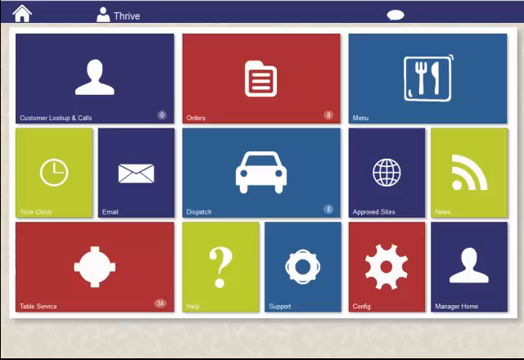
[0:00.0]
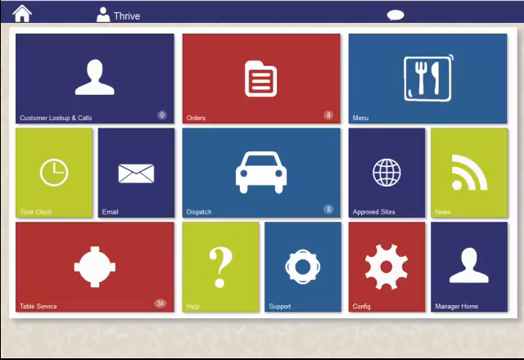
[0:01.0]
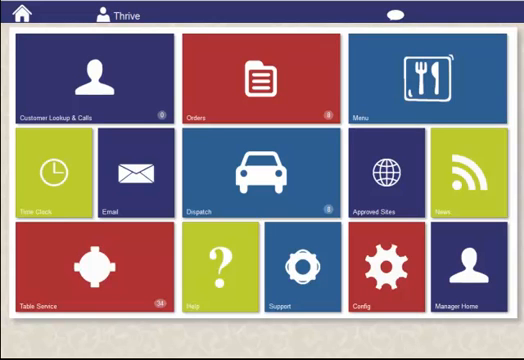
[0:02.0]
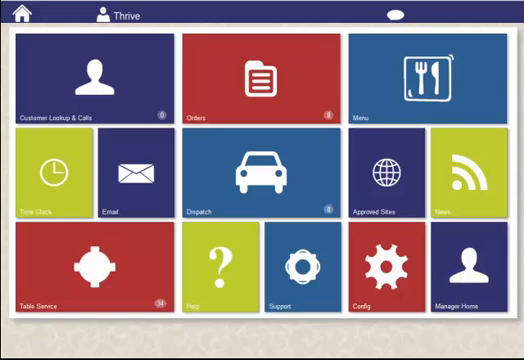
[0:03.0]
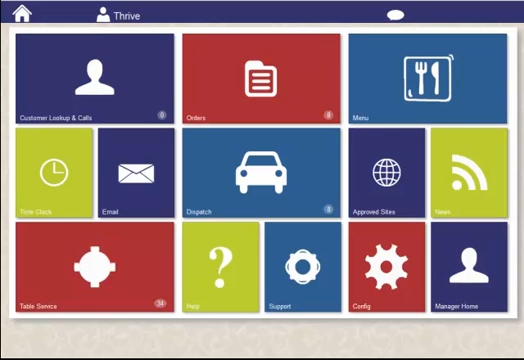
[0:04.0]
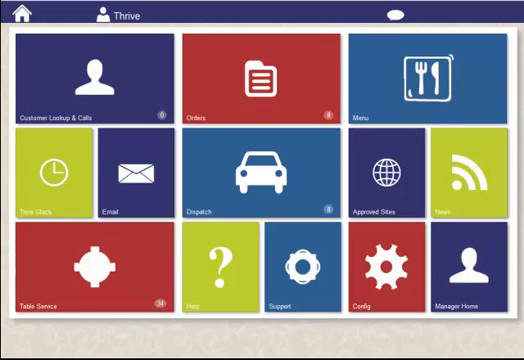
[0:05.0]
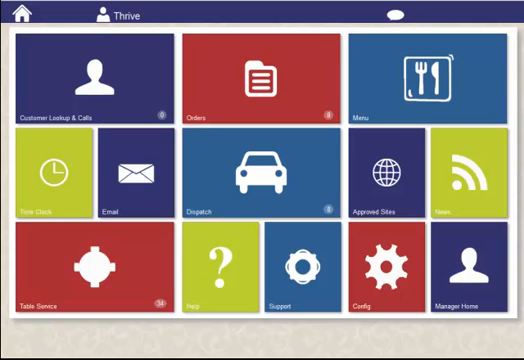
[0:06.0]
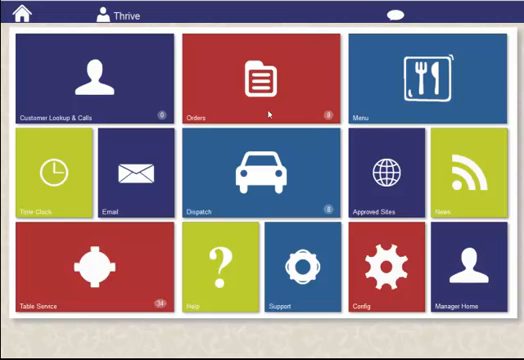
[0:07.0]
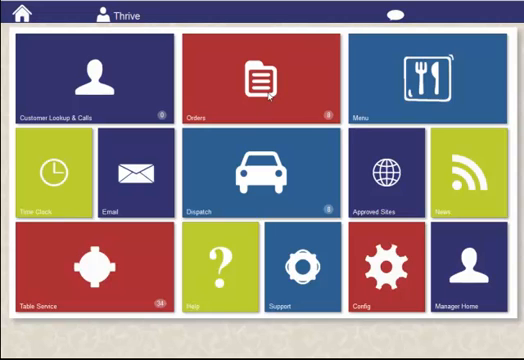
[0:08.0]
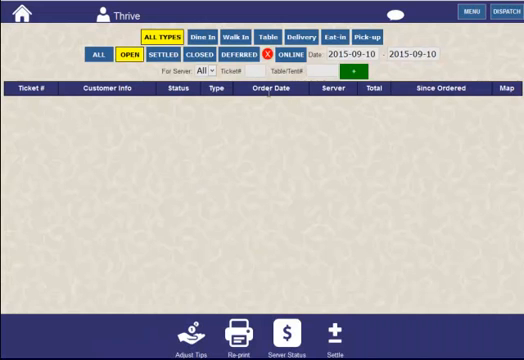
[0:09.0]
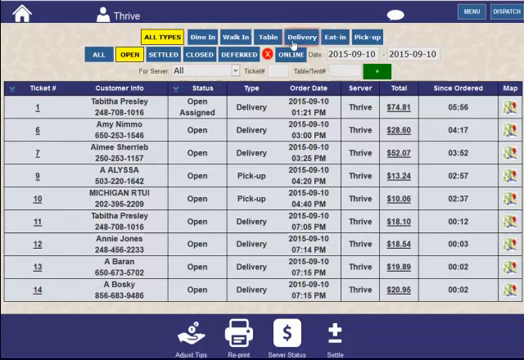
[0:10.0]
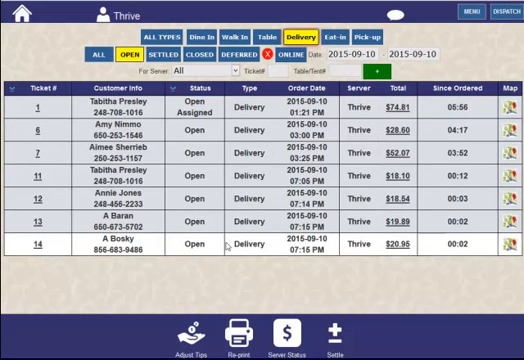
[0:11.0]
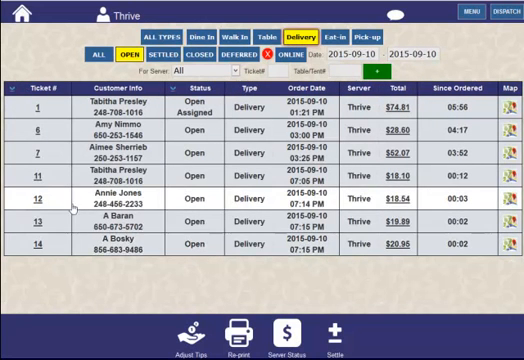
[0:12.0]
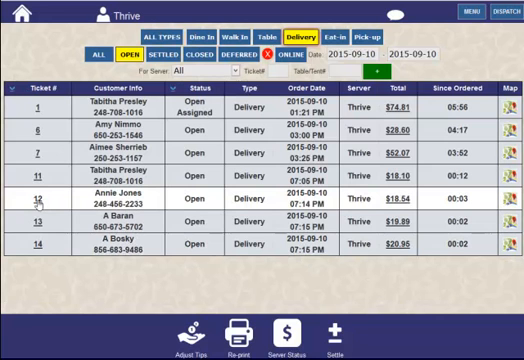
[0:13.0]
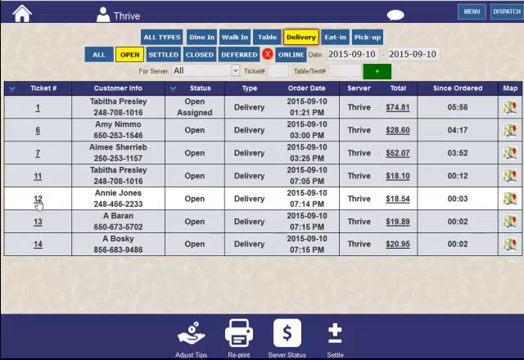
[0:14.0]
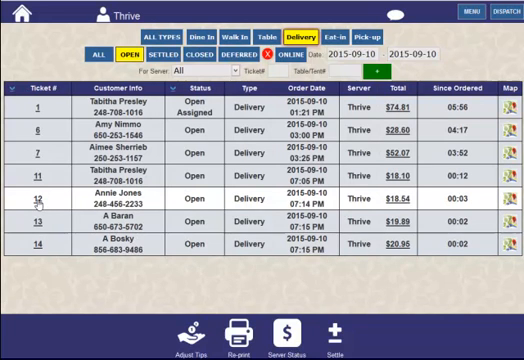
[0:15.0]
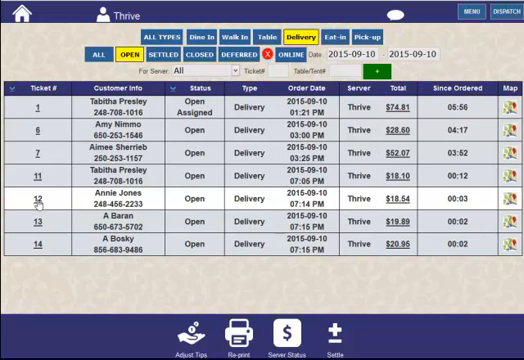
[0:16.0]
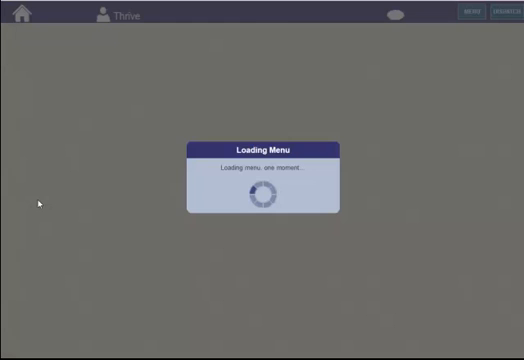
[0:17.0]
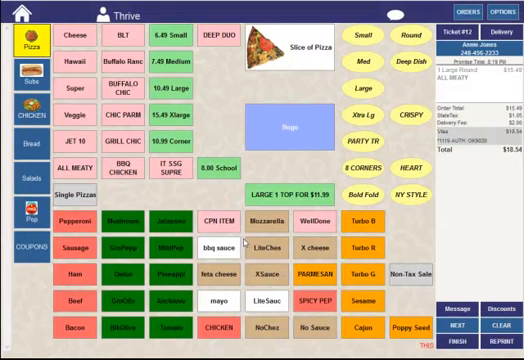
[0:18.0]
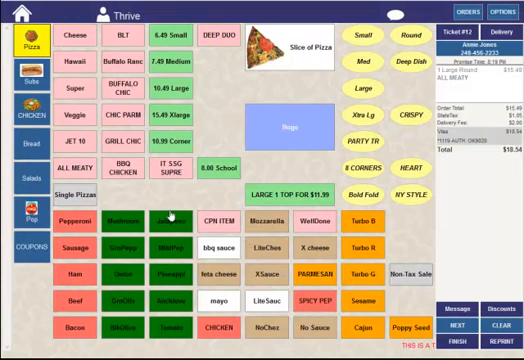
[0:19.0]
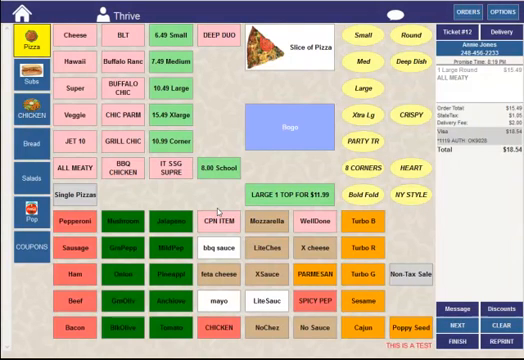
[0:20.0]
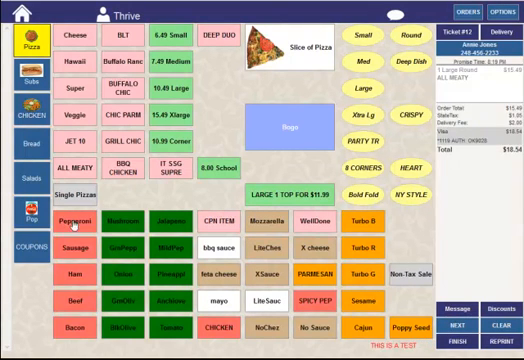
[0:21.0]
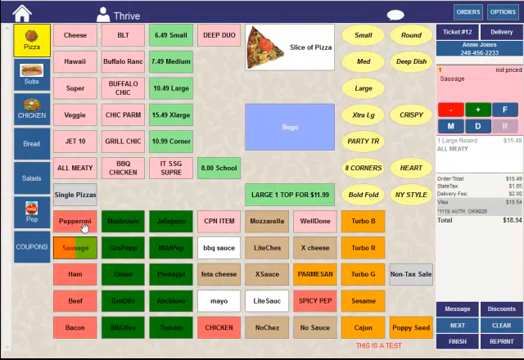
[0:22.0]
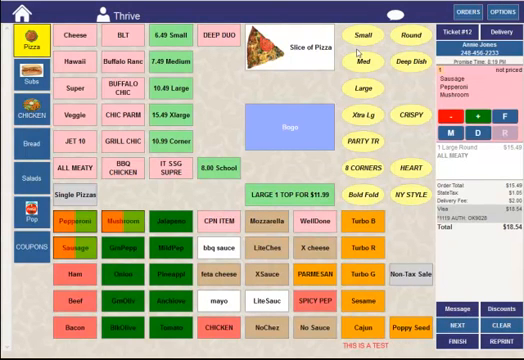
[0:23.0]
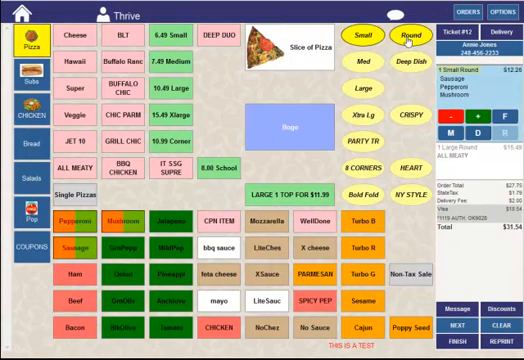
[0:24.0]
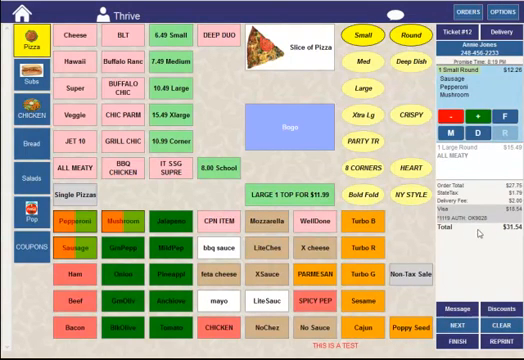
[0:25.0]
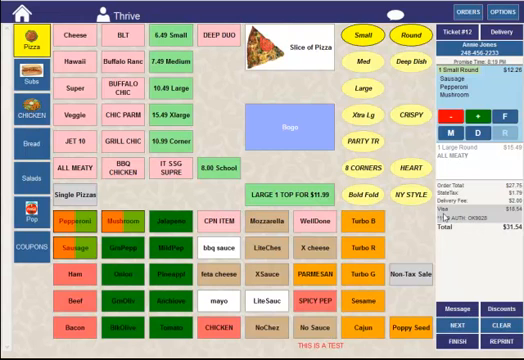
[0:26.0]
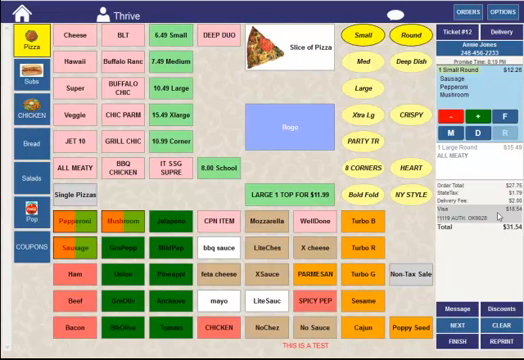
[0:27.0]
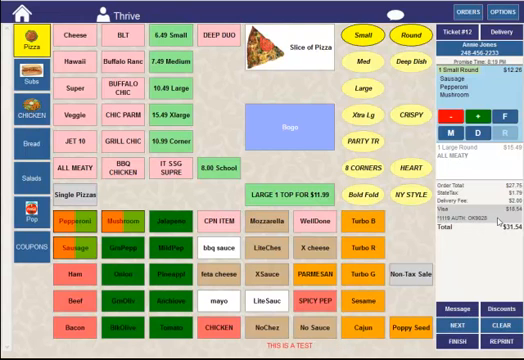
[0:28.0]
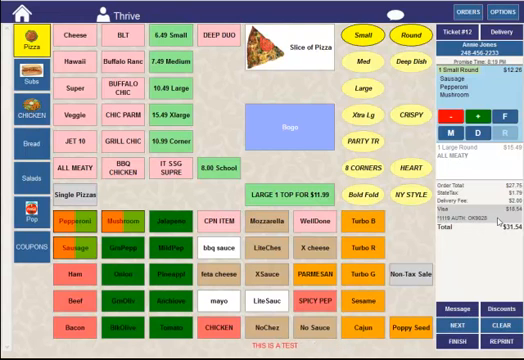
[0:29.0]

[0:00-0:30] A very colorful screen shows a large number of options to click on, in red, dark blue, light blue, yellow and white. Among the many icons are a face icon labeled "Customer Lookup & Cafe", a file icon labeled "Orders", a knife and fork icon labeled "menu", a call icon labeled "dispatch" and a cylinder icon labeled "Approved Stats". The view then changes to what looks like a delivery screen showing customer info, the status of each order, the delivery and the time, and the time each order was made. Options at the top let the user choose whether the customer is dining in, a walk-in customer or sitting at the table. The person clicks on Annie Jones's order, the menu loads, and the pizza menu appears, showing the different food options.